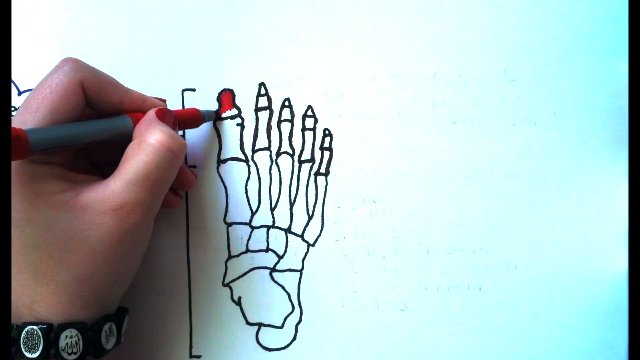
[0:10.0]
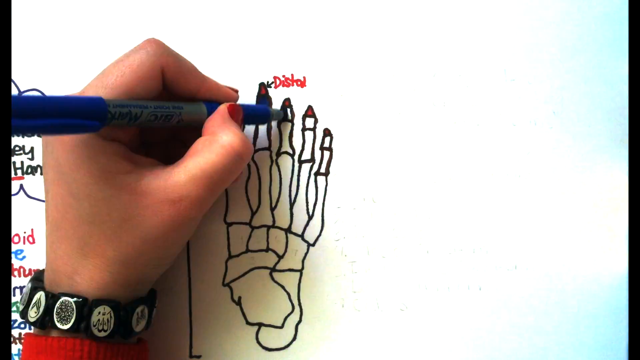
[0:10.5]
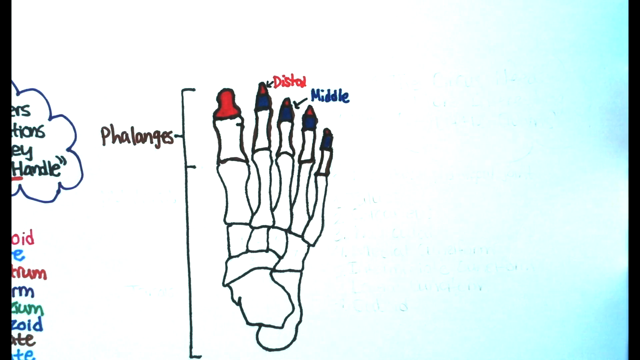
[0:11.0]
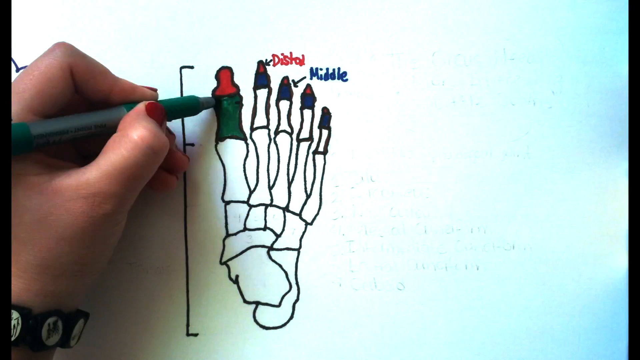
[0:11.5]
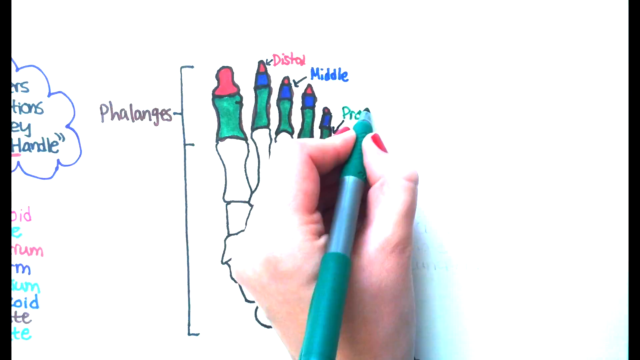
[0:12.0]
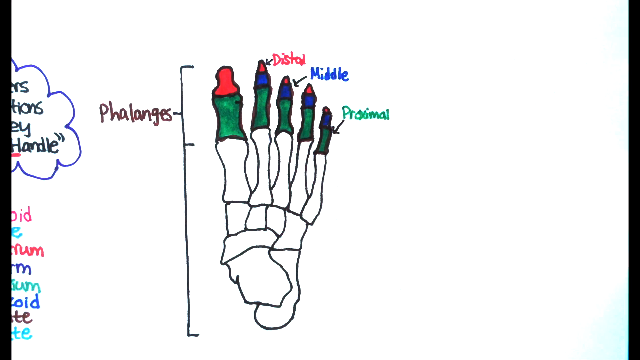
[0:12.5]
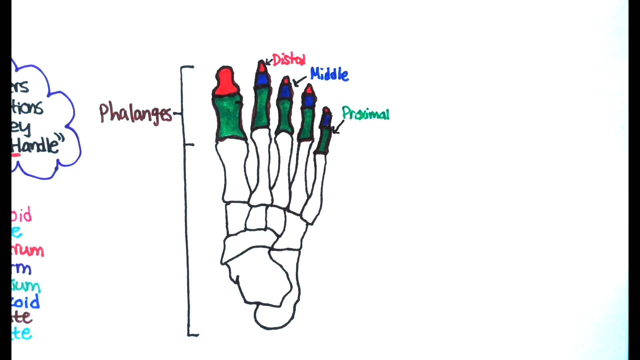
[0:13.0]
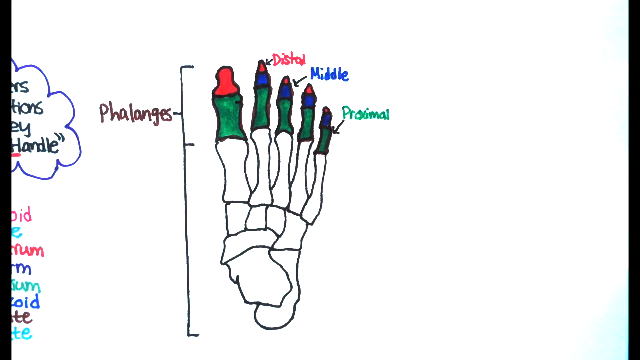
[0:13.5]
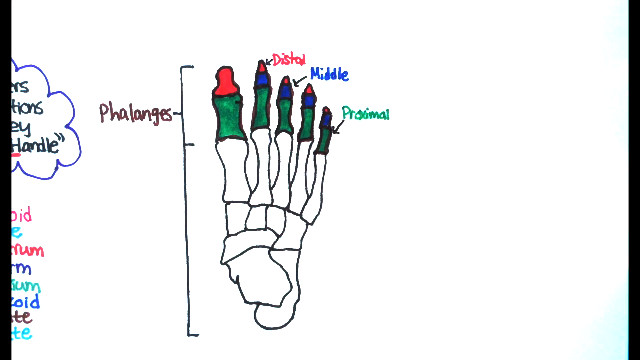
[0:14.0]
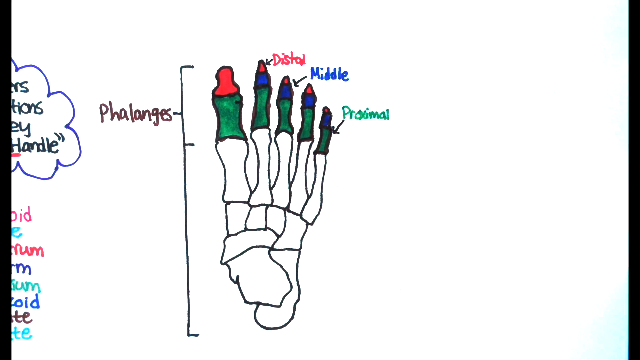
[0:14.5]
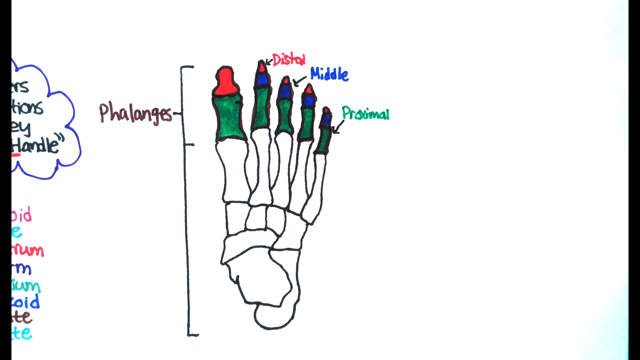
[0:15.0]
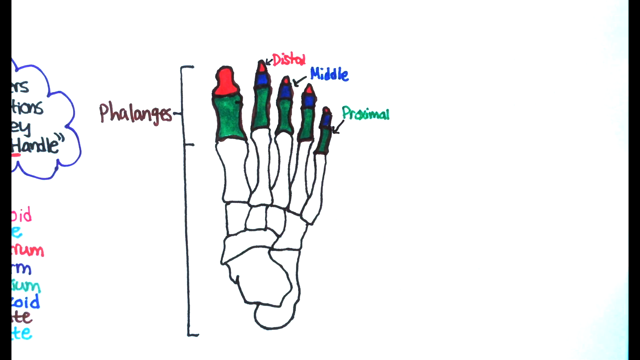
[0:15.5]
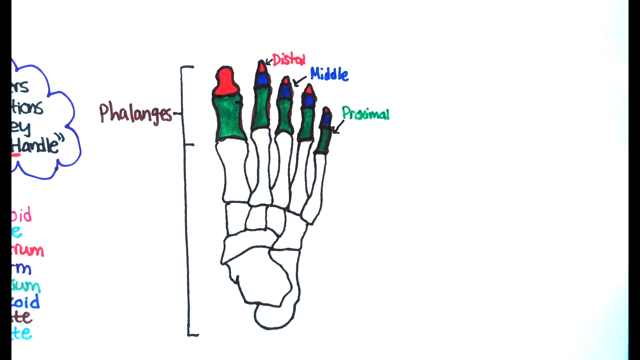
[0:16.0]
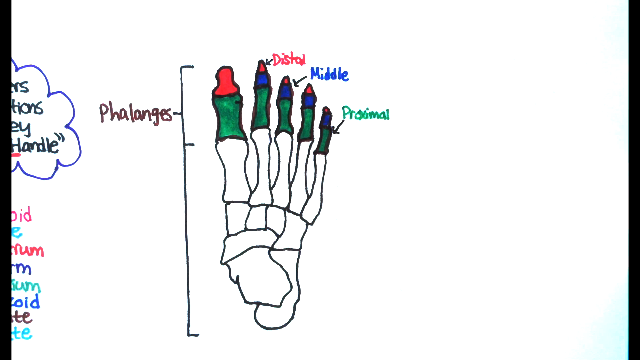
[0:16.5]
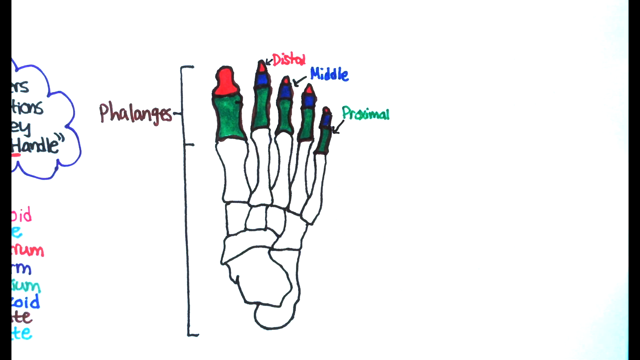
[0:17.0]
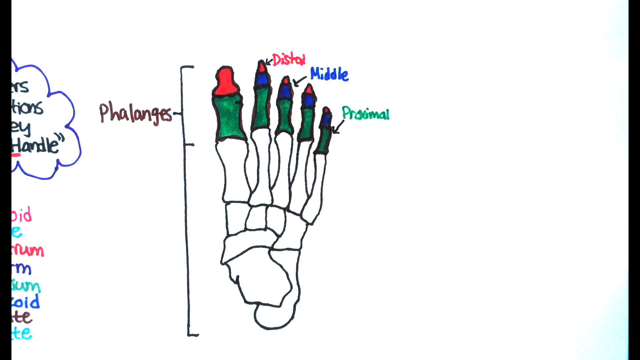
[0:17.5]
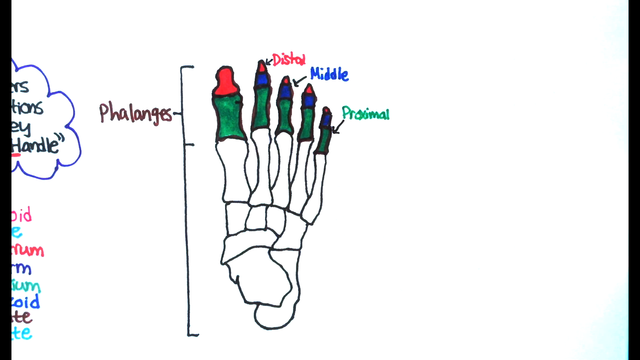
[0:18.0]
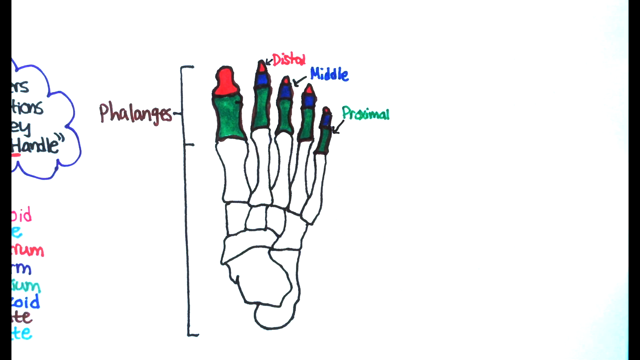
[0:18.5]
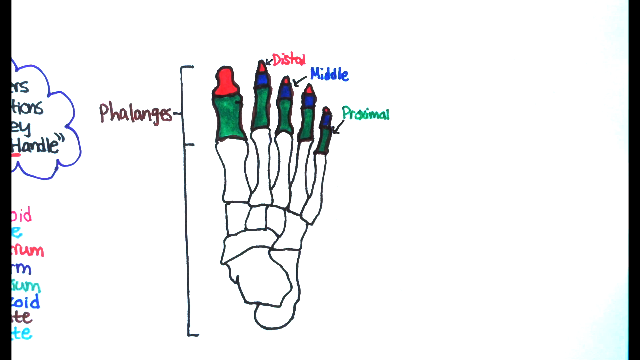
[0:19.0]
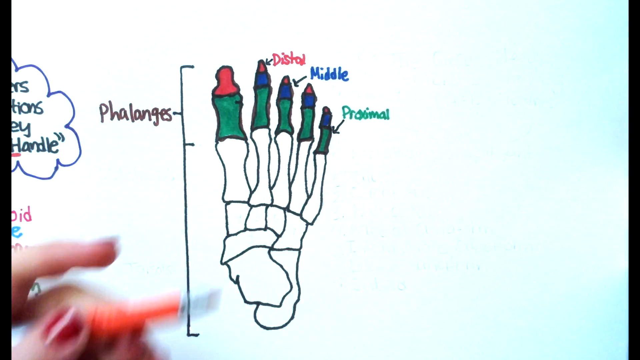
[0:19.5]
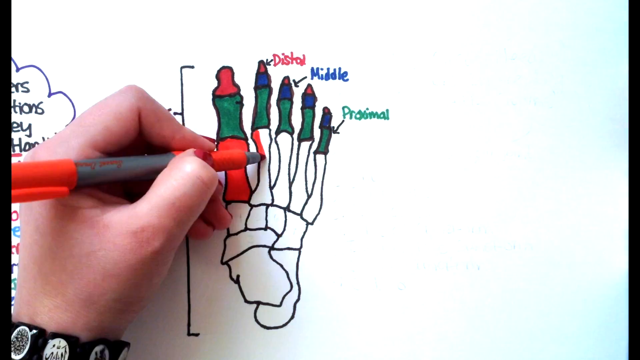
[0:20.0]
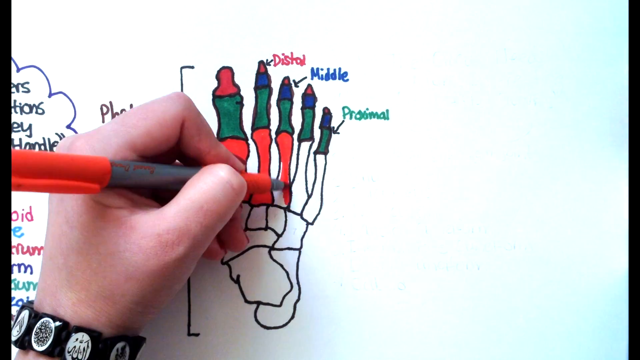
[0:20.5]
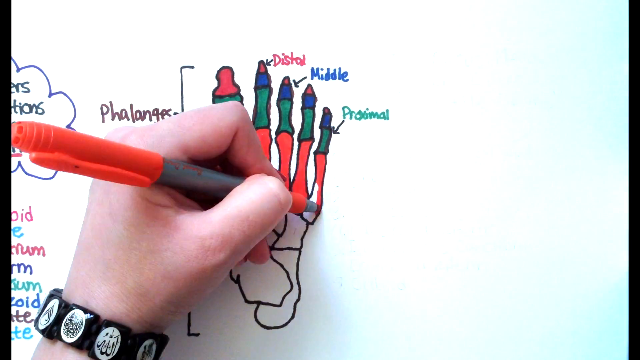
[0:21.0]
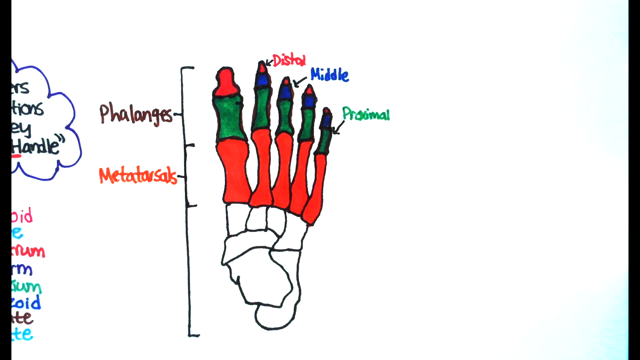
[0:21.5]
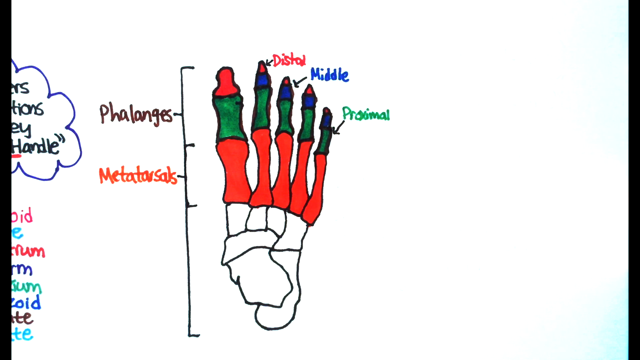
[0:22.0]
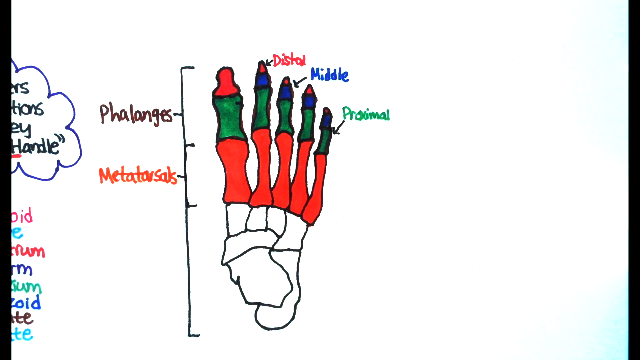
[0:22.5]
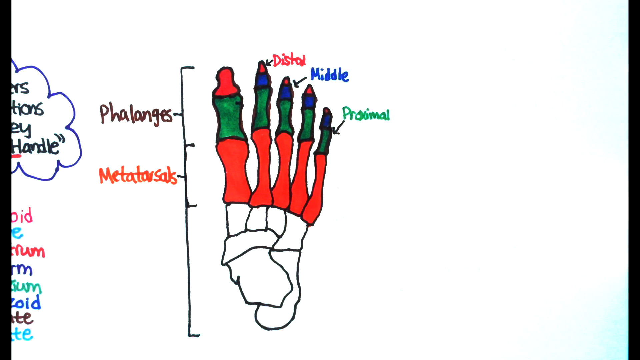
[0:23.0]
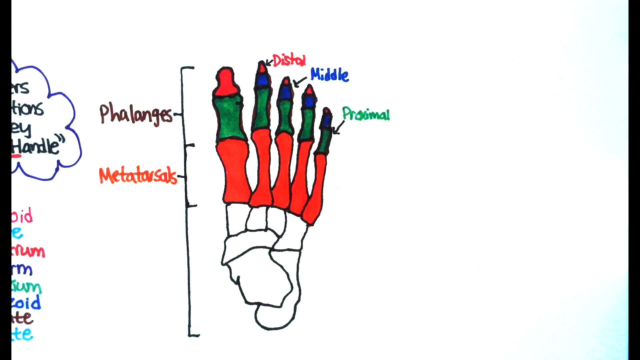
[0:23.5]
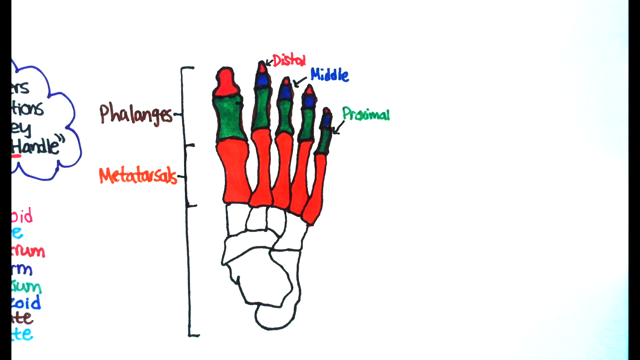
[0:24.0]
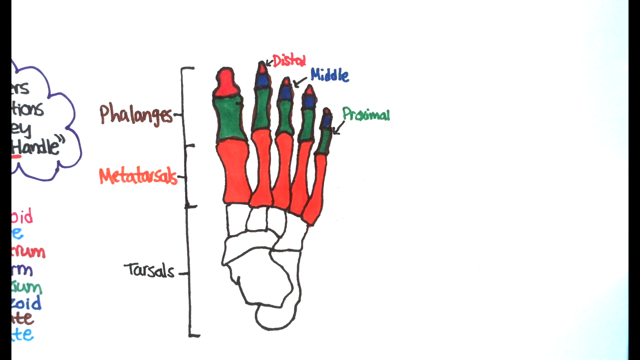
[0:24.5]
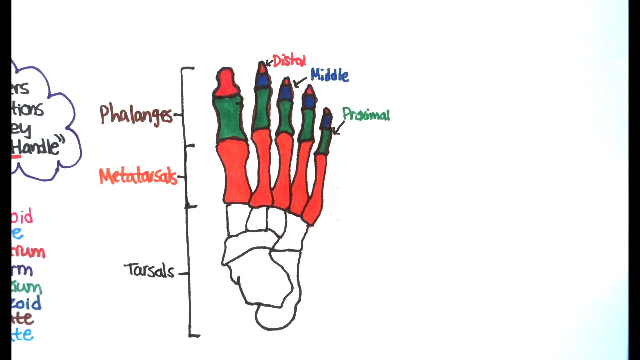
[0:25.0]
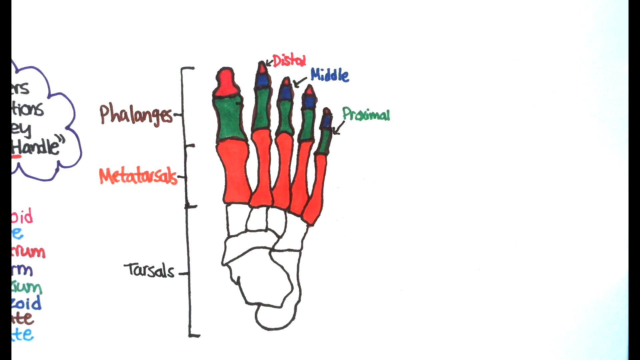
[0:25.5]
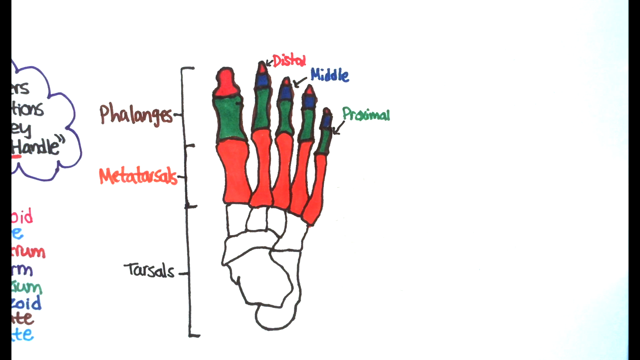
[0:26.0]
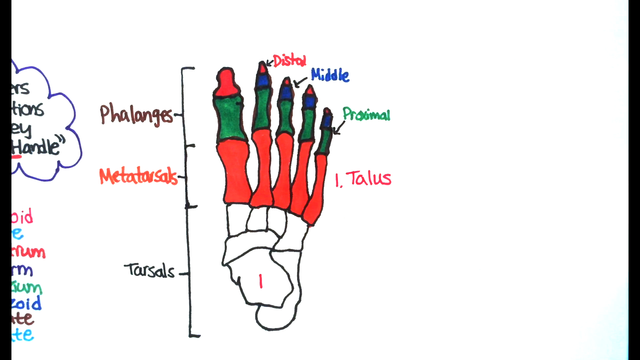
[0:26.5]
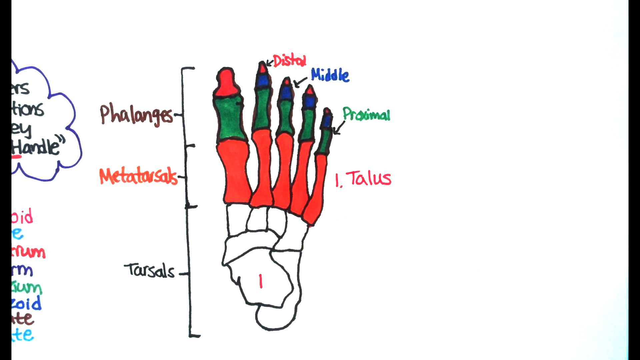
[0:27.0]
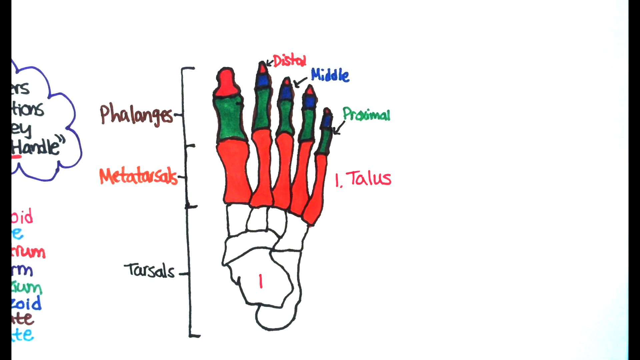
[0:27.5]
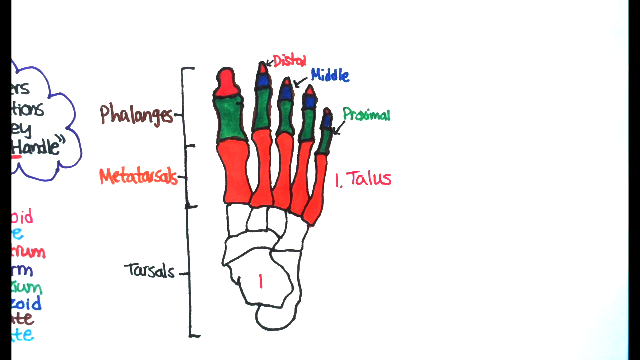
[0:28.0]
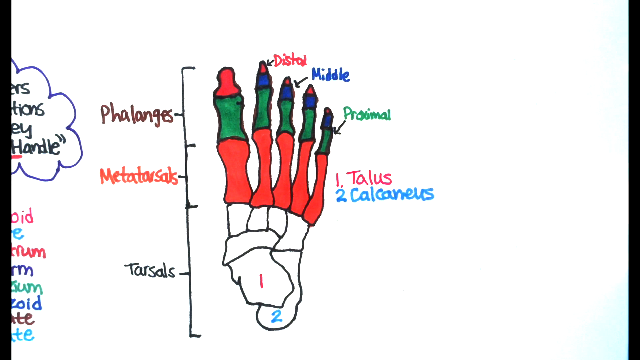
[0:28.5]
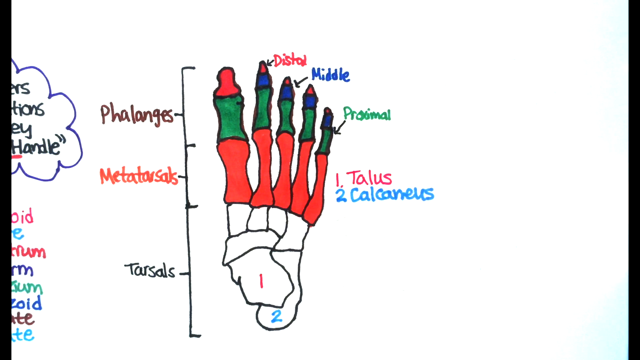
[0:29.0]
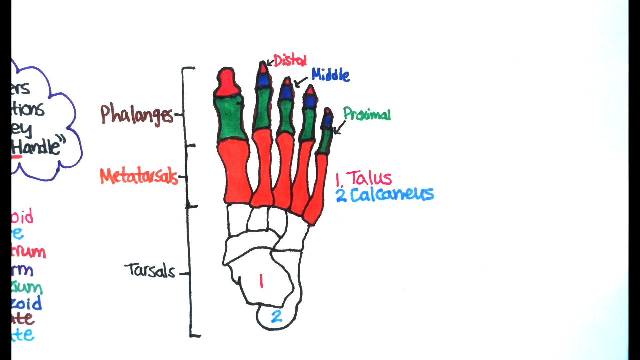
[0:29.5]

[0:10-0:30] The woman continues drawing the hand or foot, and the labeling happens live as she draws. She brings up different colored markers and draws with them accordingly. Her nails are painted red, and she wears a thick black bracelet on her left hand. In a time-lapse, labels appear for every part of the bone, with arrows pointing at each respective piece. After the time-lapse of her coloring in the hand or foot, different labels appear one by one, featuring their colors and a number system, with numbers placed on the areas. On the right side is a key legend matching each number to its respective piece of bone in the image.